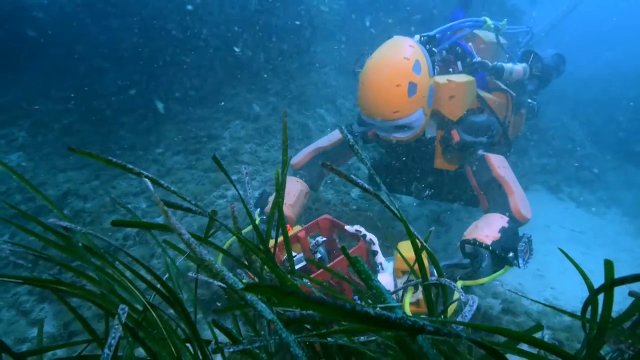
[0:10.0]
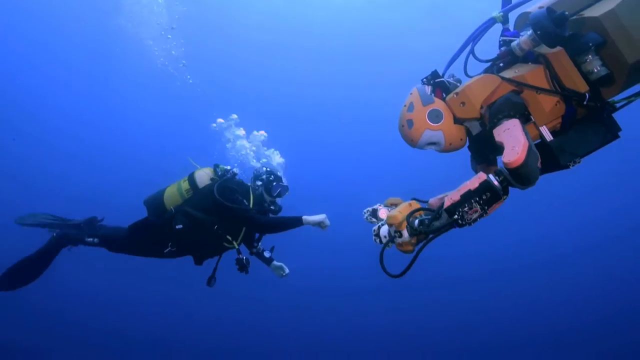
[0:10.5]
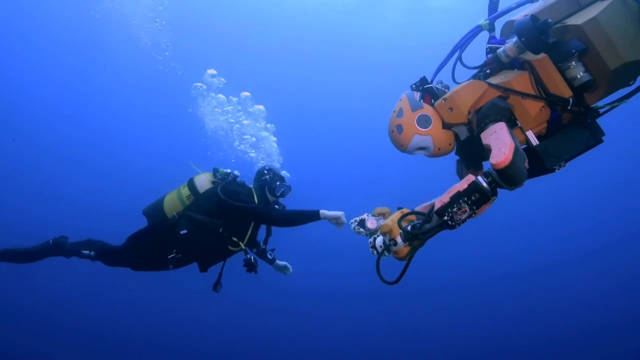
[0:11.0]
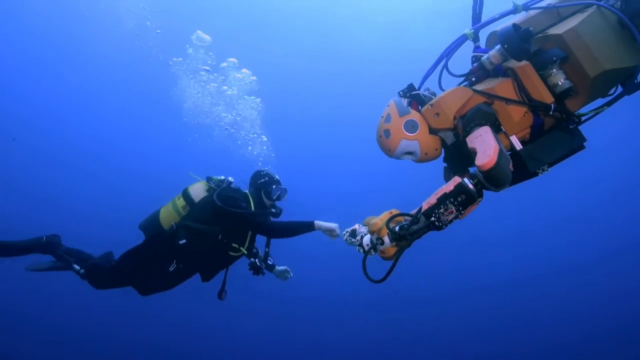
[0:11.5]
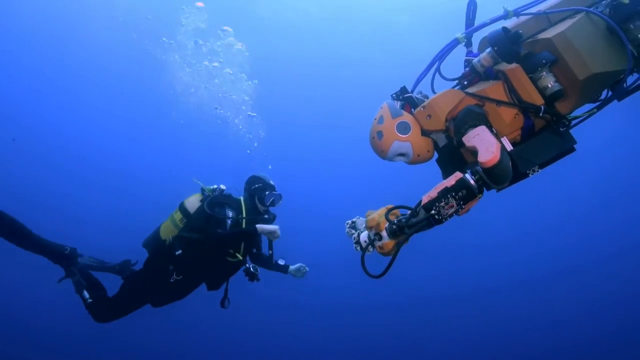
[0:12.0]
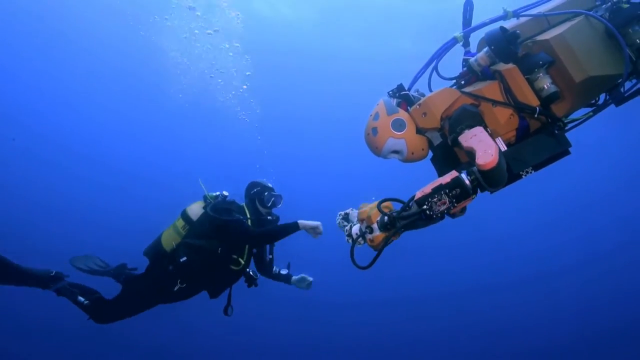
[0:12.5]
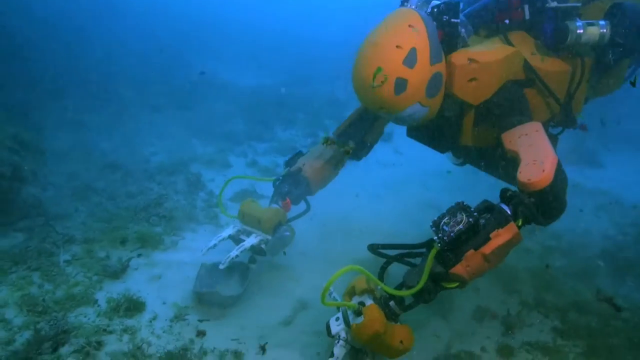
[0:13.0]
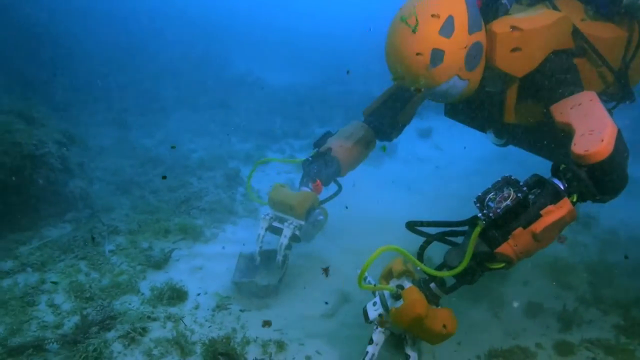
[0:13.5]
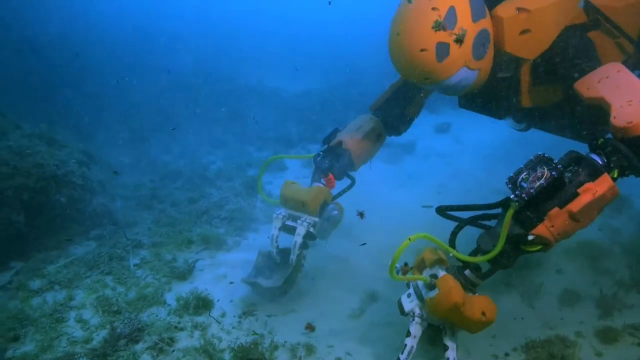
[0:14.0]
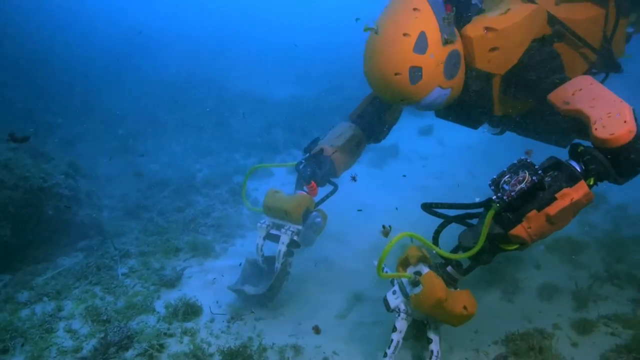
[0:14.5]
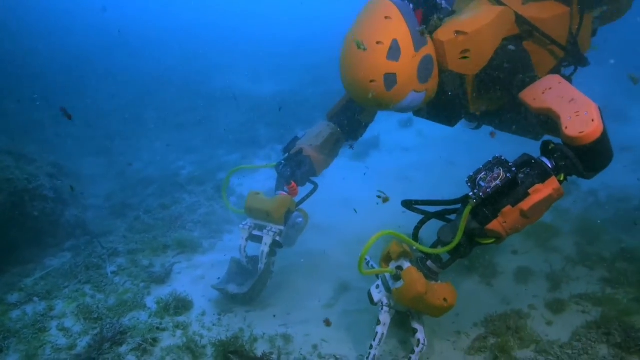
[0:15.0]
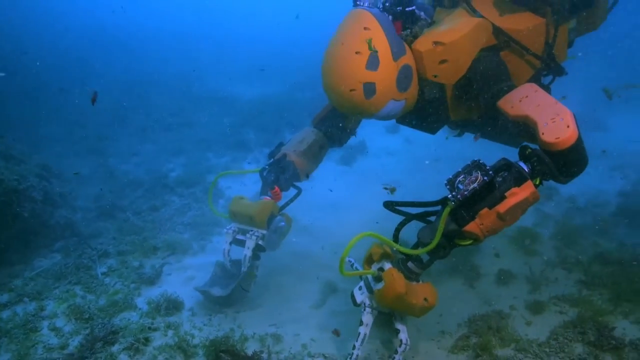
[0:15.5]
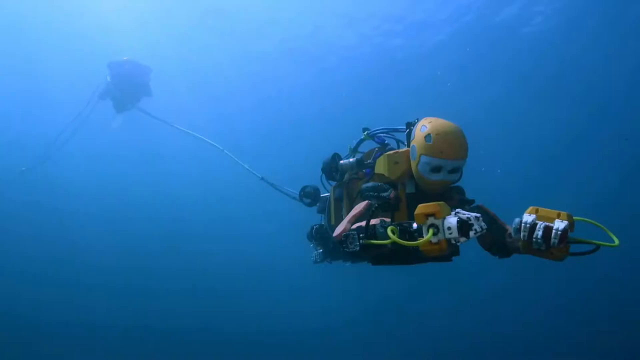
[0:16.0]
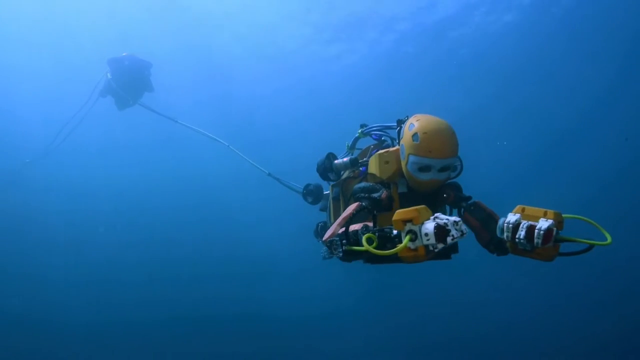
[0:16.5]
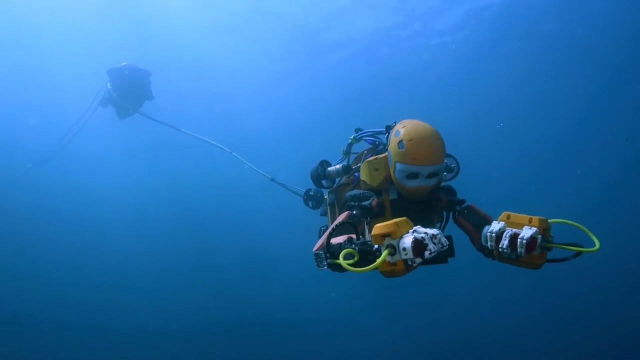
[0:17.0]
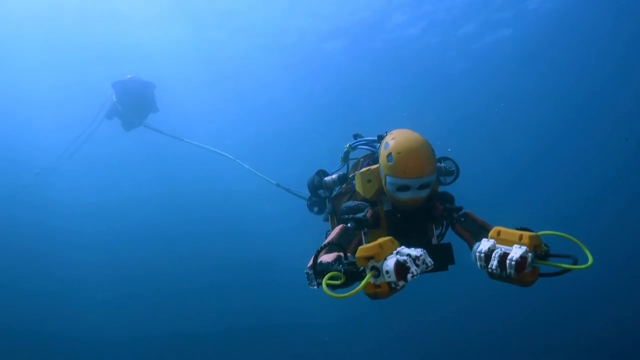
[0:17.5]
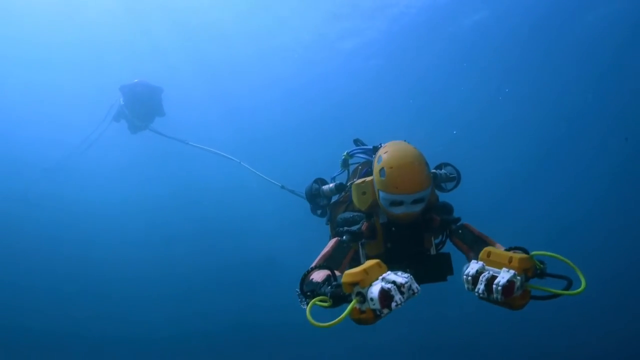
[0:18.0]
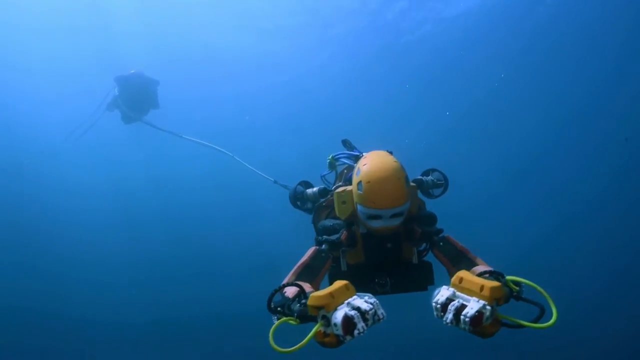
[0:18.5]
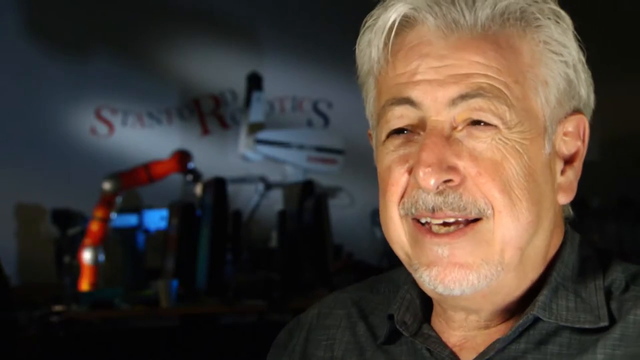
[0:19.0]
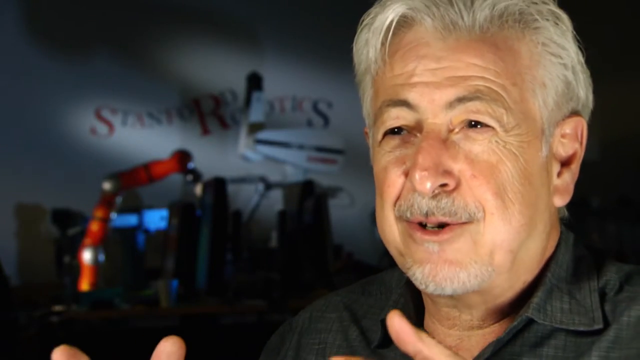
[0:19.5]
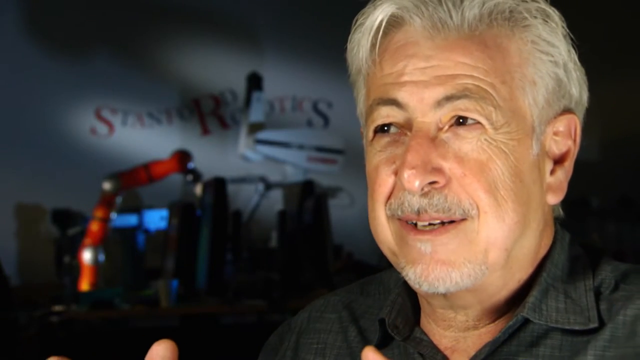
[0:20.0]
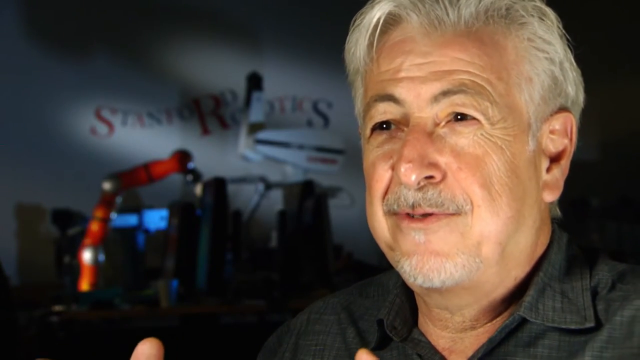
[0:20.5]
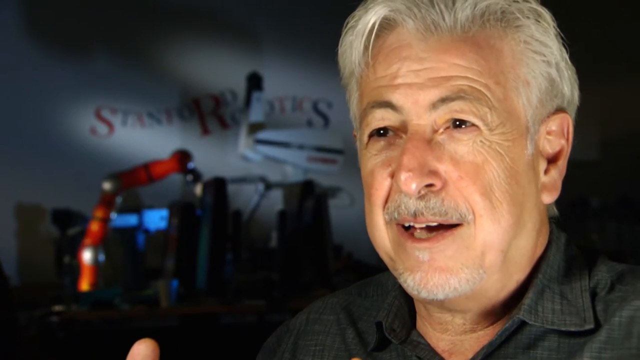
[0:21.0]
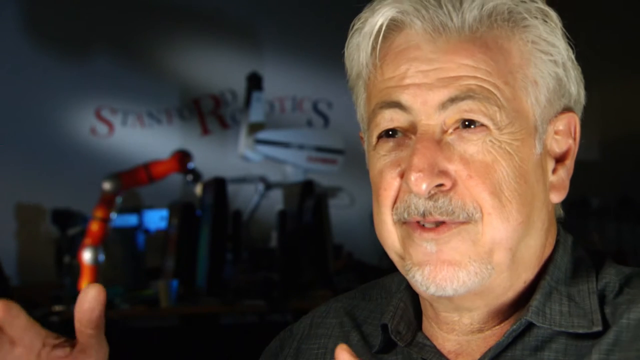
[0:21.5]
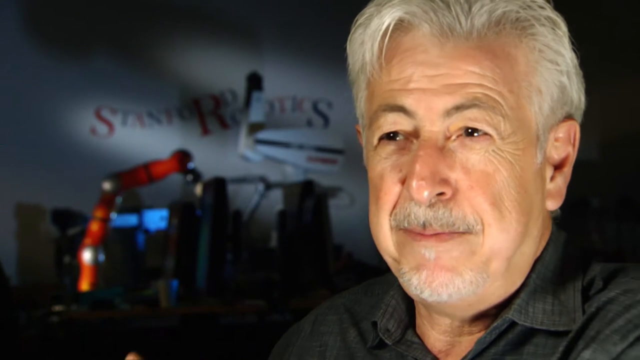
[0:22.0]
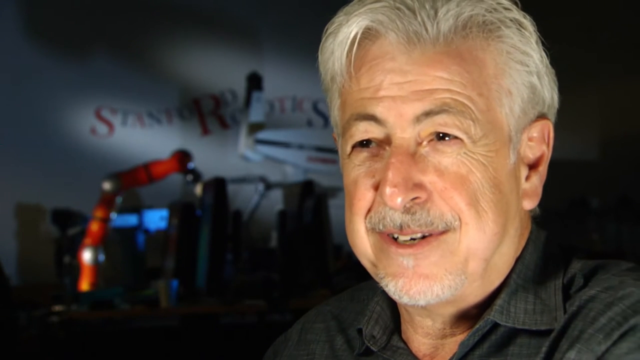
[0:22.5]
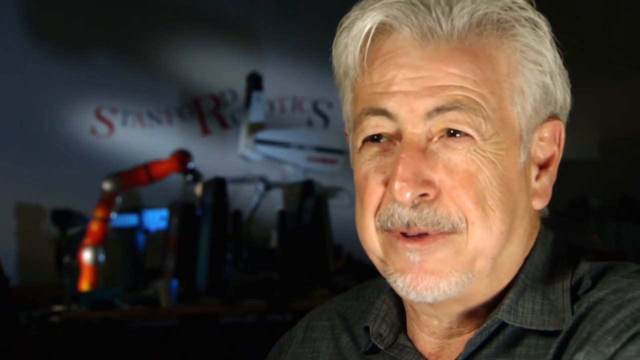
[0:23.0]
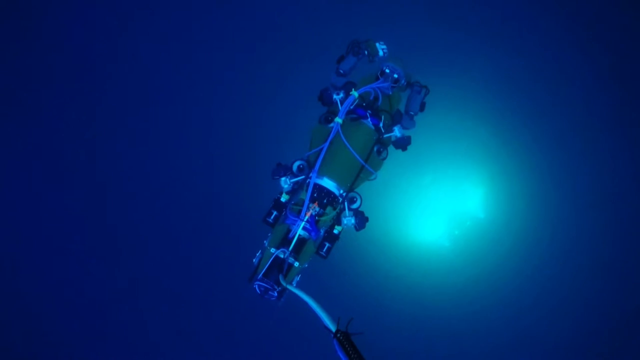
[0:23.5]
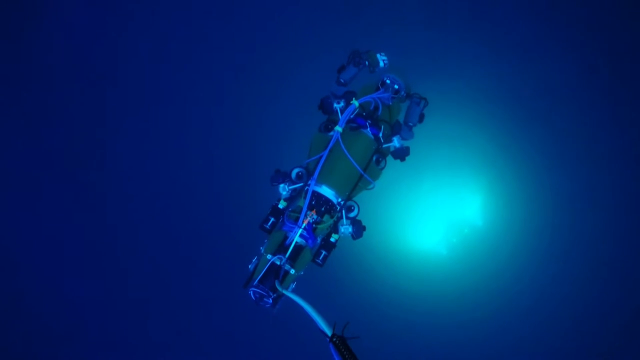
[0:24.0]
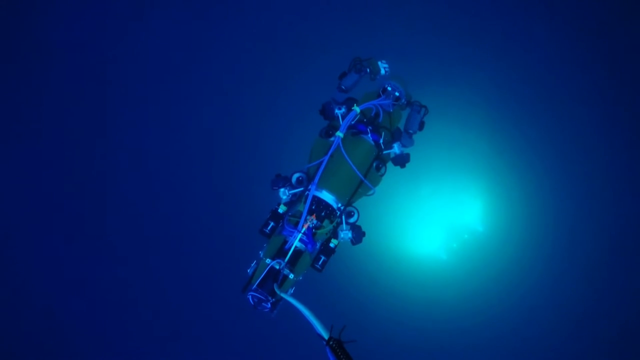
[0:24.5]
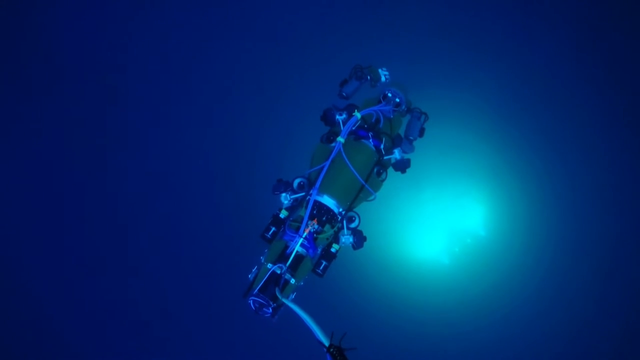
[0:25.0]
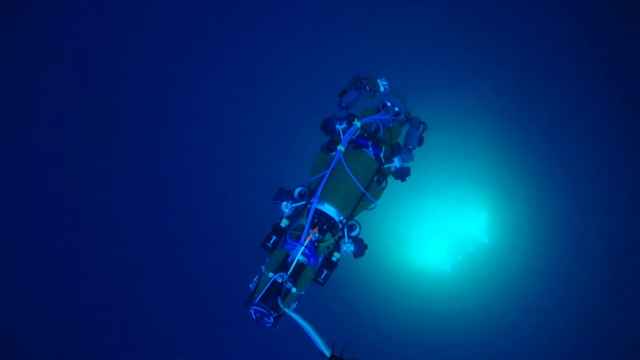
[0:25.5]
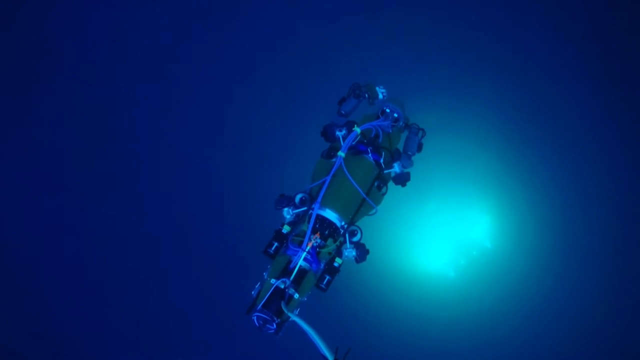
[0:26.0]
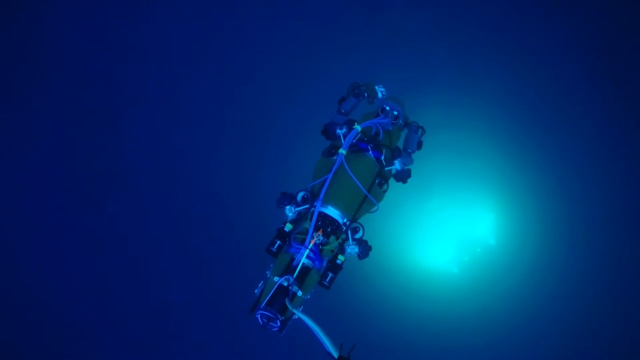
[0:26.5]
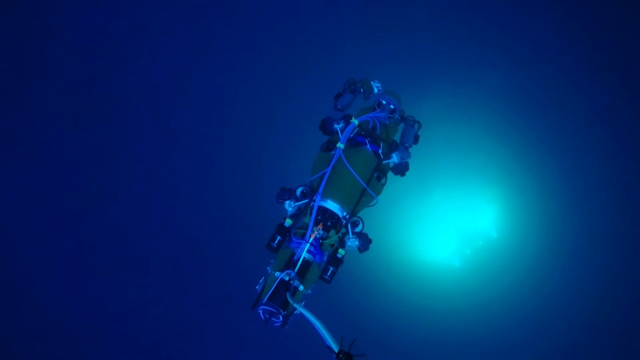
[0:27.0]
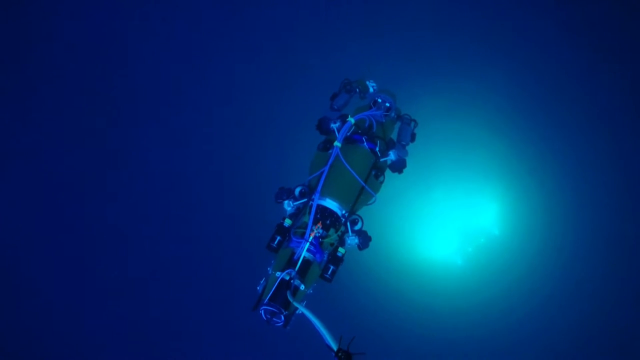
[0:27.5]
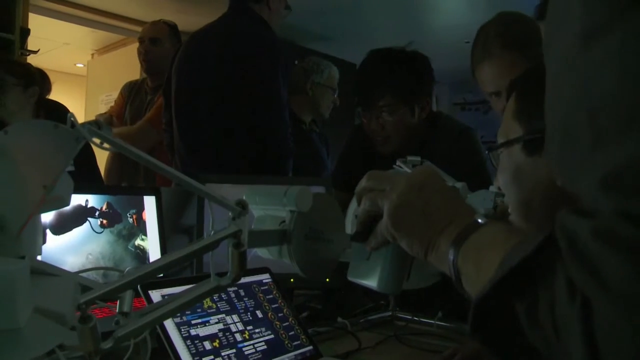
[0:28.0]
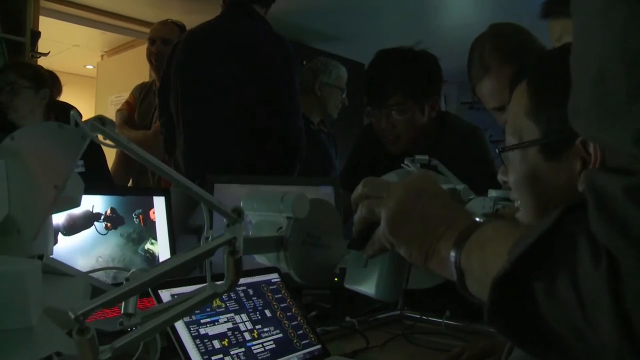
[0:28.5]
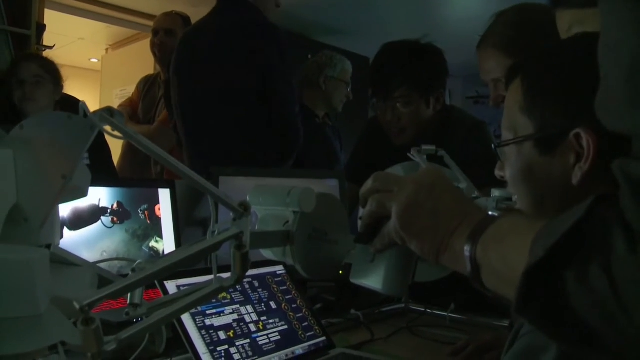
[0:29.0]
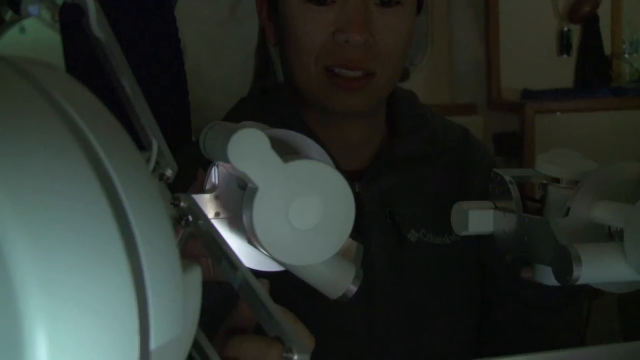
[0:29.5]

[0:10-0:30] The humanoid robot grabs what looks like a square red box. The vegetation in the water is green. The robot looks almost like a human stretched out underwater, belly down, and its eye area looks gray. Divers join the robot. One of them wears a black diving suit and has what looks like a yellow or maybe yellowish-white gas tank on his back. He gives the robot a fist bump gesture, and the robot seemingly returns it, while bubbles leave the diver's scuba mask. It is unclear how far underwater they are. Different tubes extend from the head area and the arms of the humanoid robot.